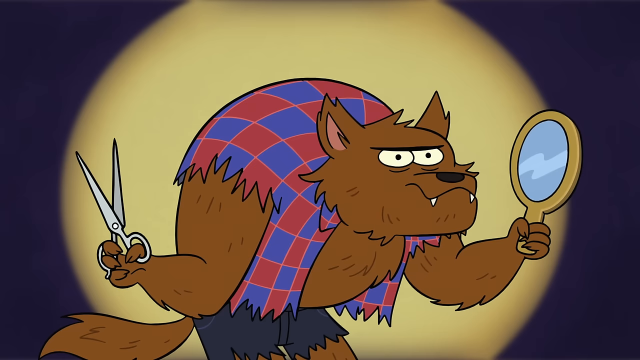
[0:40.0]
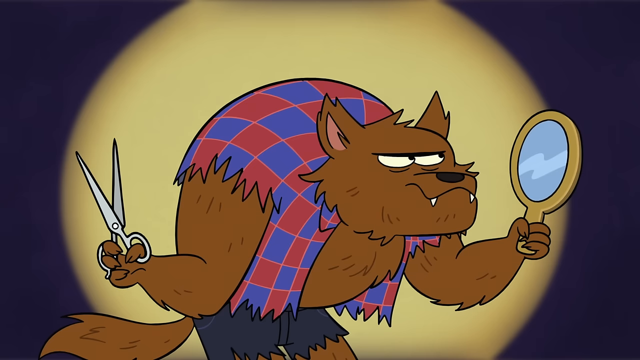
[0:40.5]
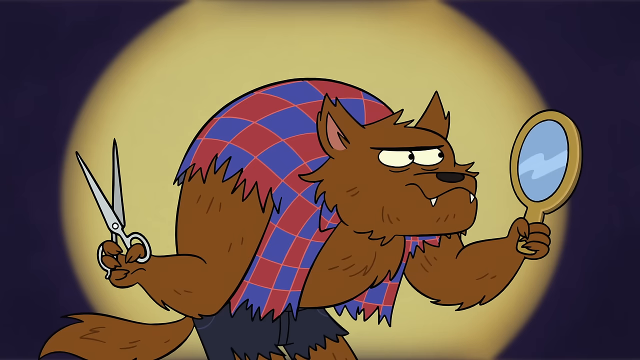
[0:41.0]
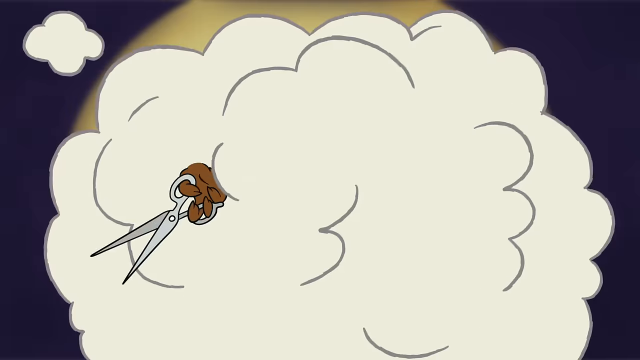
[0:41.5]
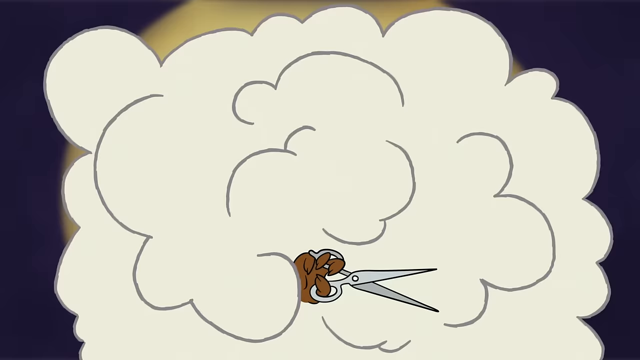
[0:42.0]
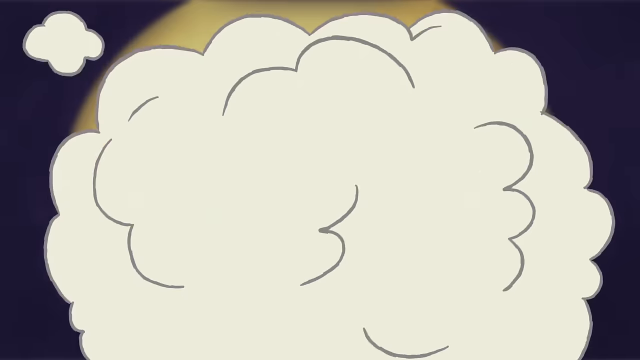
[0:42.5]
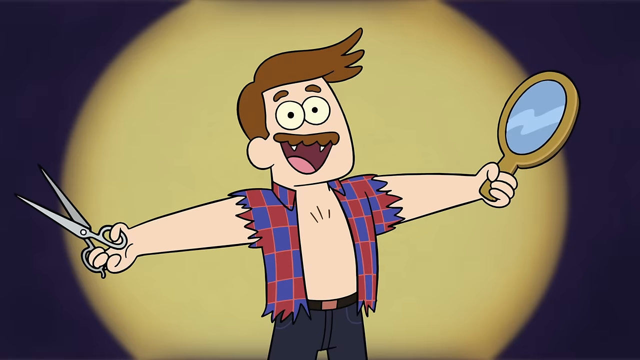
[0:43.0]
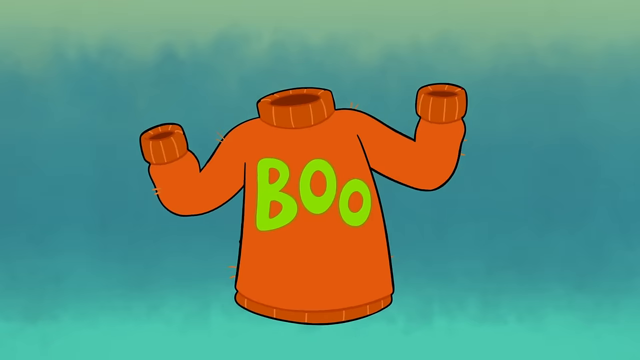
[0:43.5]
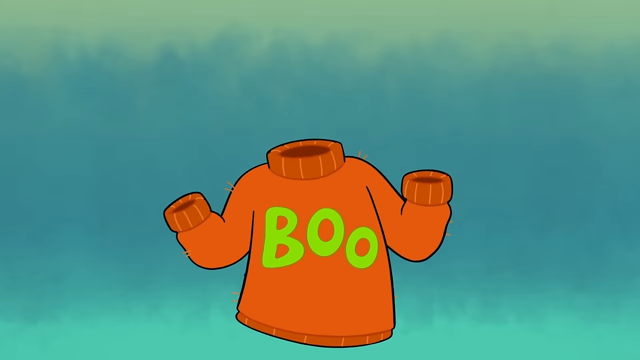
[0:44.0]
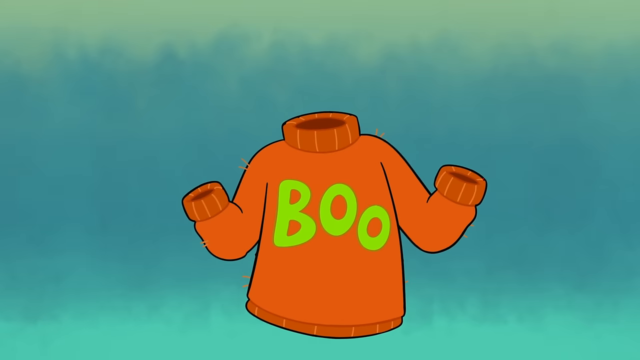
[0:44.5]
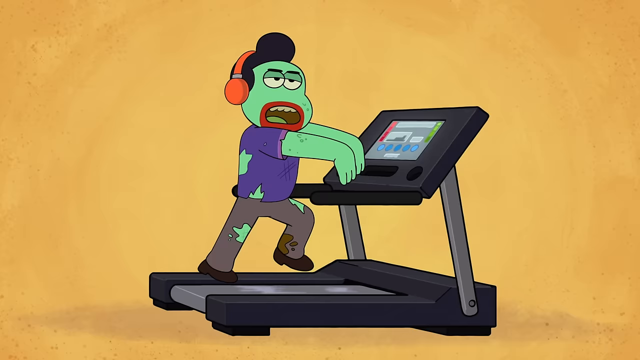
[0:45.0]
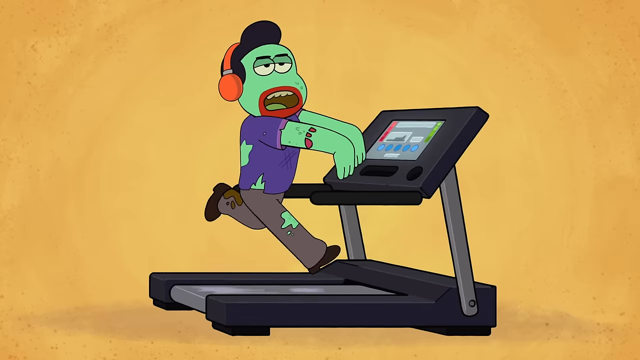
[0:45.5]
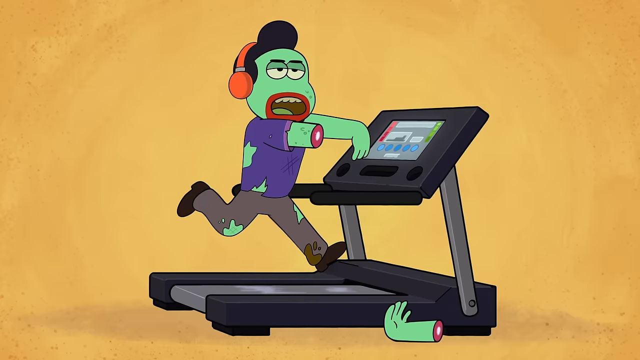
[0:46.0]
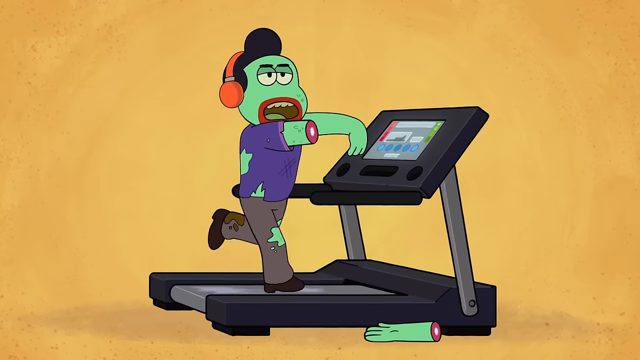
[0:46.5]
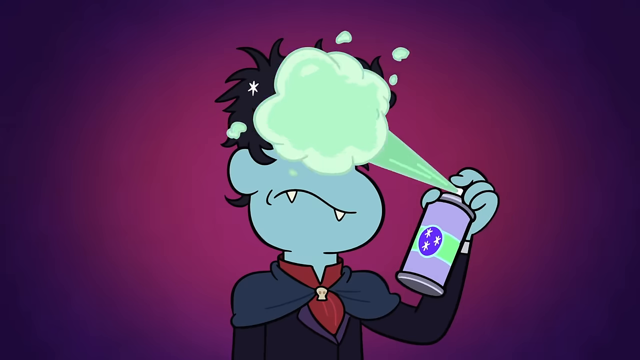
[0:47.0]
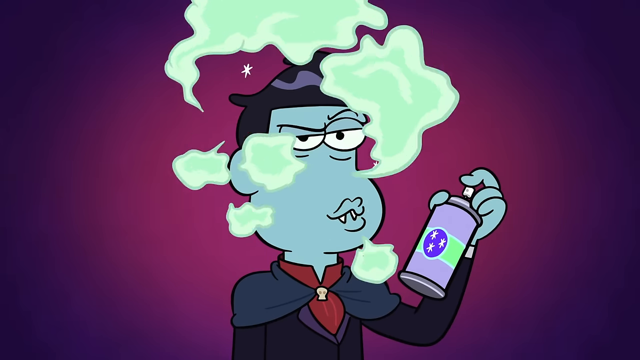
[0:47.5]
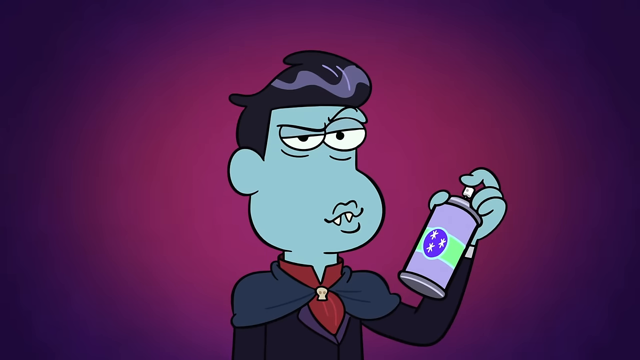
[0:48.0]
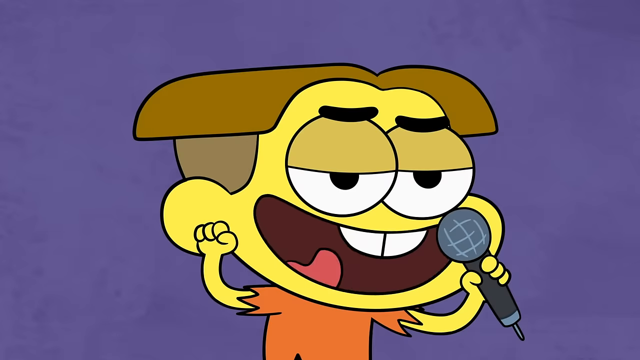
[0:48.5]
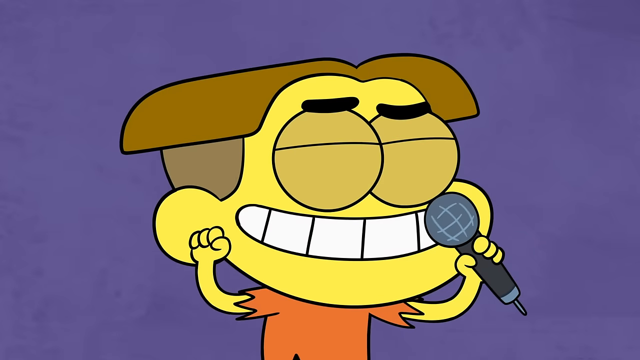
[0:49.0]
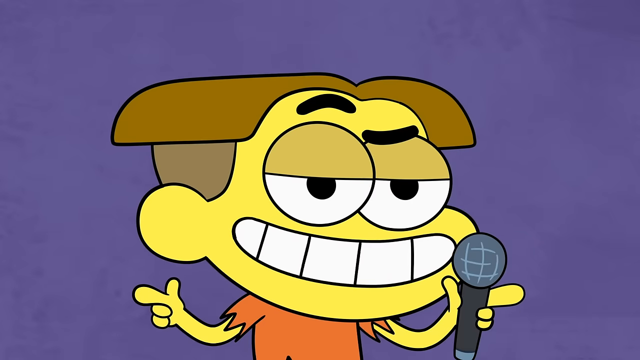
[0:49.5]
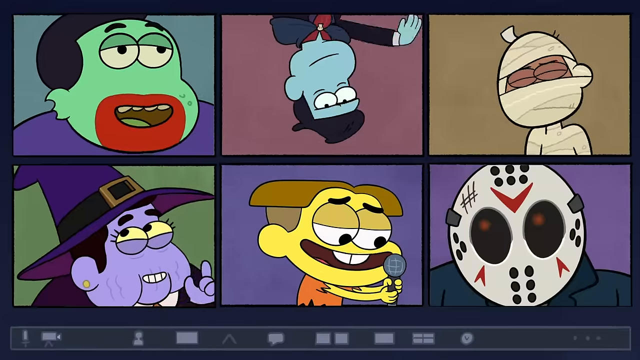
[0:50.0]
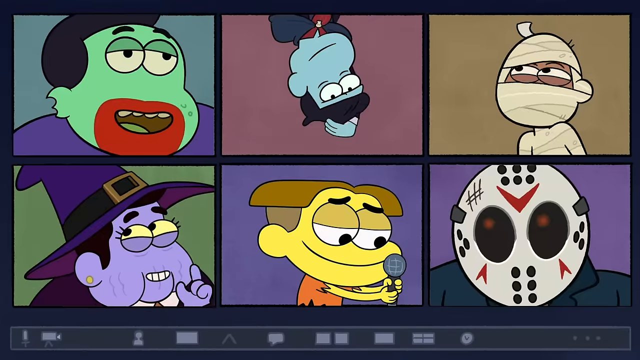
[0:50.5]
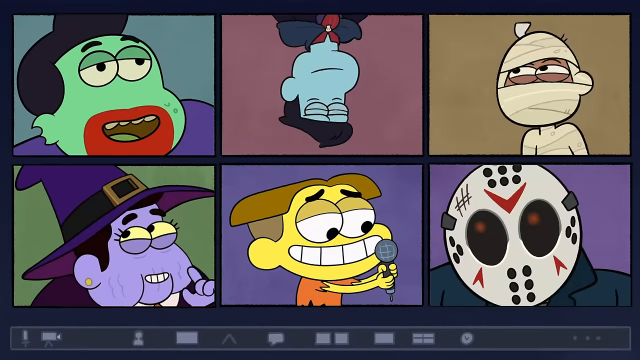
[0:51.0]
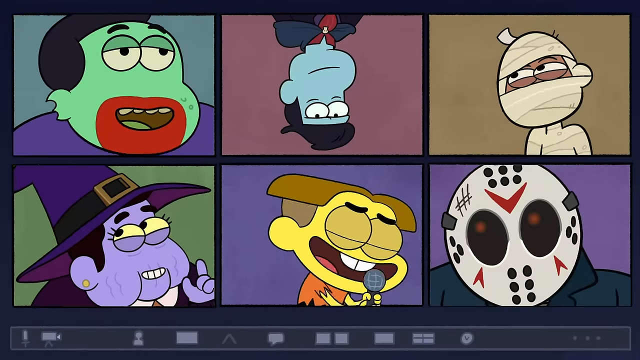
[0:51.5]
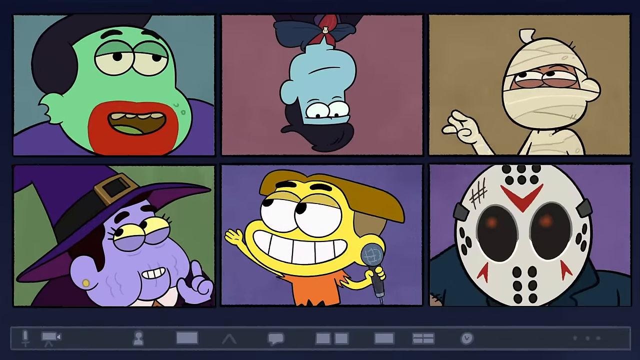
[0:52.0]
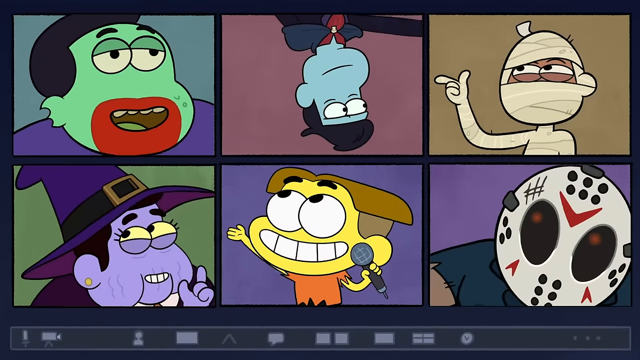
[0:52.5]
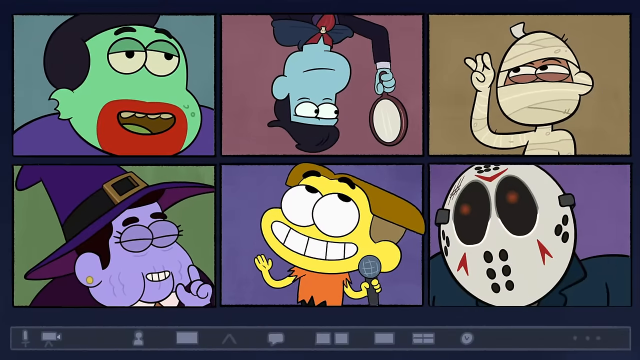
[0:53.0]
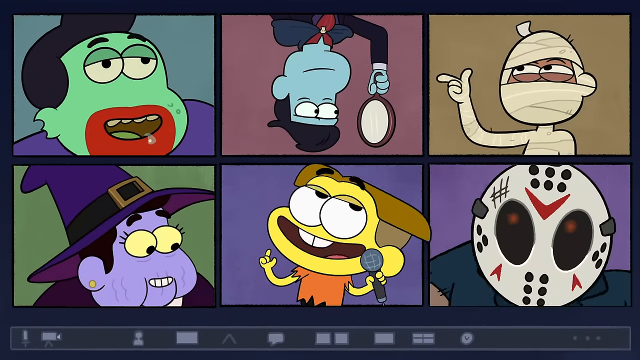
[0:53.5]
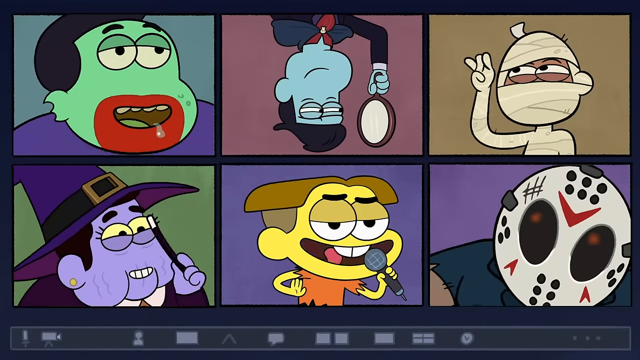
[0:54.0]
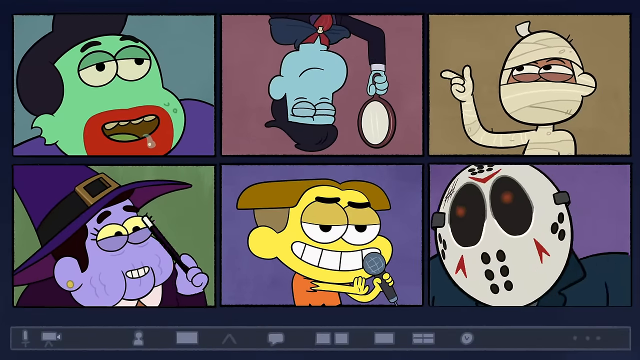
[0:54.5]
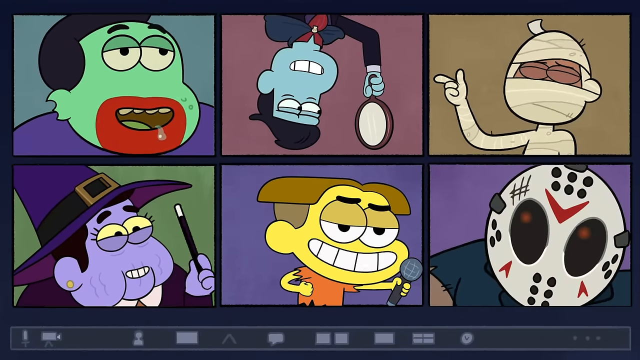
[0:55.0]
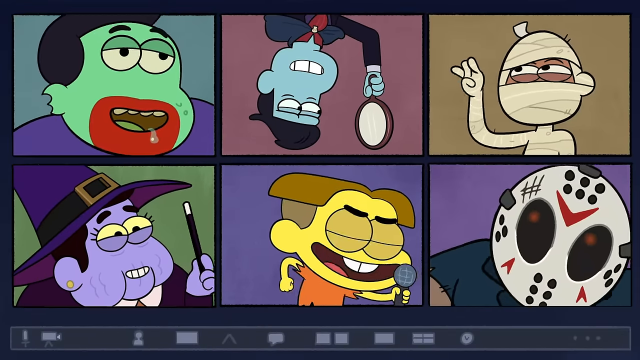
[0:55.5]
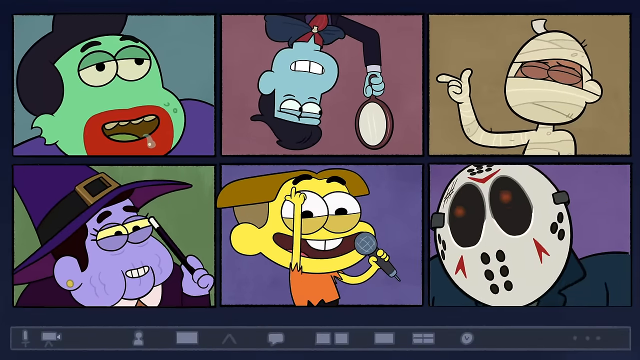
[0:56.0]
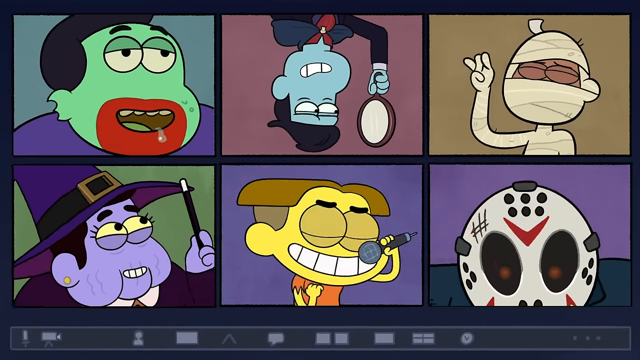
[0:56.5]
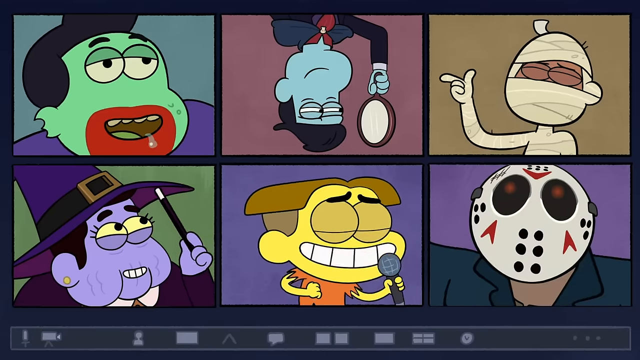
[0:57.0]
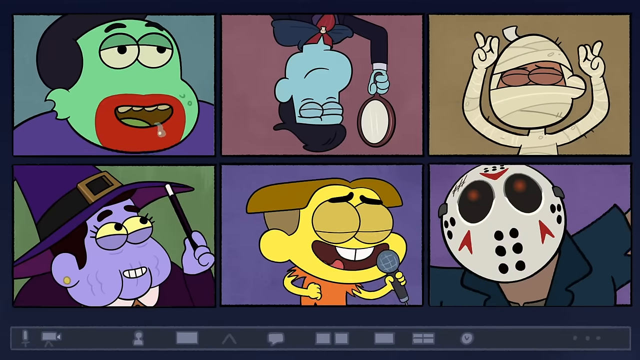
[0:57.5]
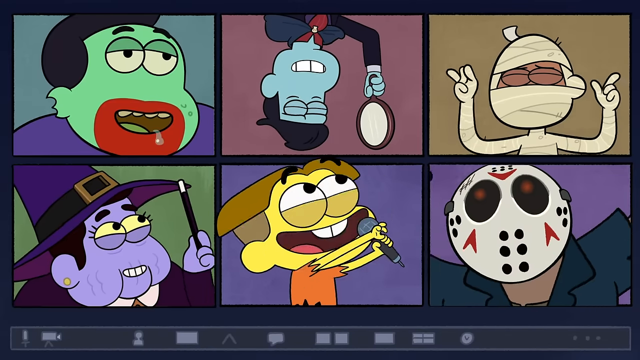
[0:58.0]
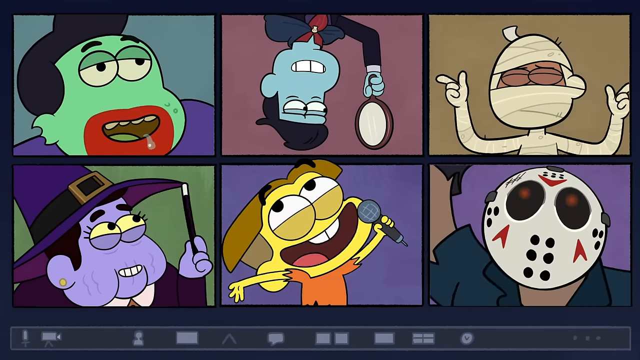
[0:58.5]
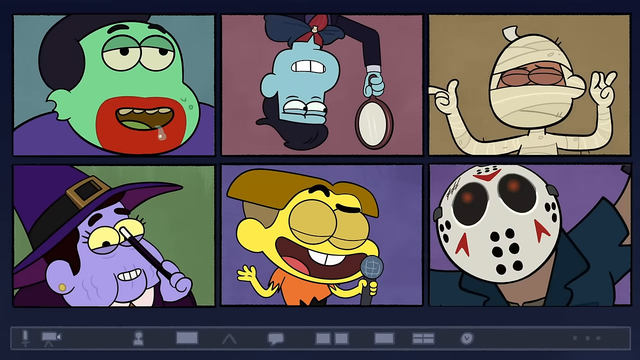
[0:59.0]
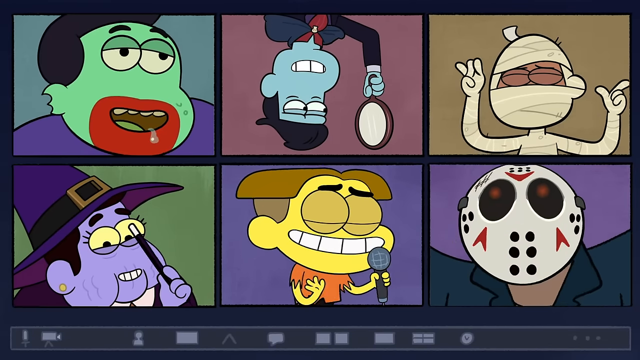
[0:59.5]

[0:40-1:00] A werewolf holds scissors in his right hand and looks in a mirror held in his left hand. He wears a tattered, ripped blue and red plaid shirt and has an angry expression. He disappears into kind of a dust cloud, where he apparently uses the scissors on himself, and emerges looking like a very manicured human, with well-groomed hair and a good-looking mustache. His ripped shirt now fits him better; he is a regular white man who kind of looks like a lumberjack, still holding the scissors in his right hand and the mirror in his left, and now wearing jeans. The scene cuts to a dancing sweater with the word "boo" on it and no arms or legs coming out of the sweater holes. Next, the zombie on the treadmill runs like a zombie, wearing orange headphones over his ears; his right hand falls off mid-run. Kind of a Dracula character sprays hairspray on himself to fix his hair. Then all six are shown on the video call: Frankenstein on the top left, Dracula in the top middle, a mummy on the top right, a witch on the bottom left, the child in the bottom middle, and Freddy Krueger on the bottom right.